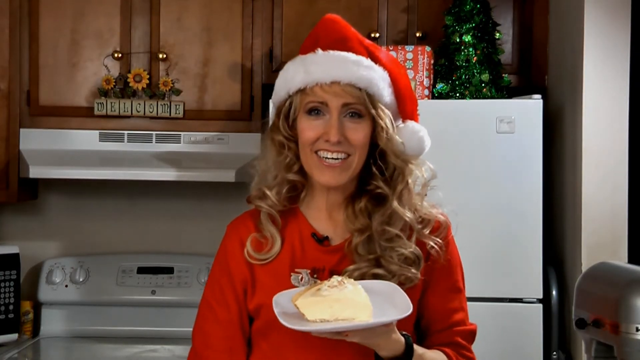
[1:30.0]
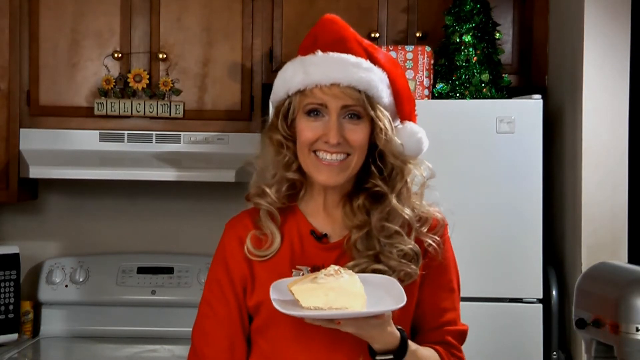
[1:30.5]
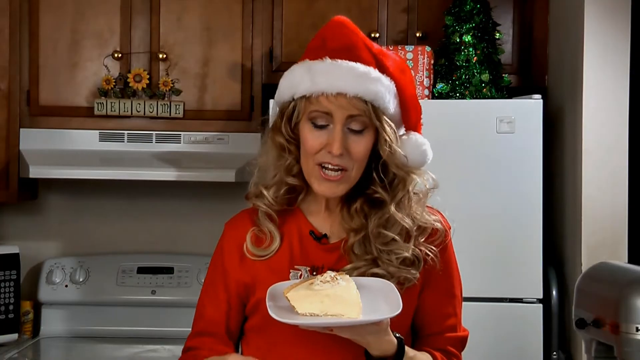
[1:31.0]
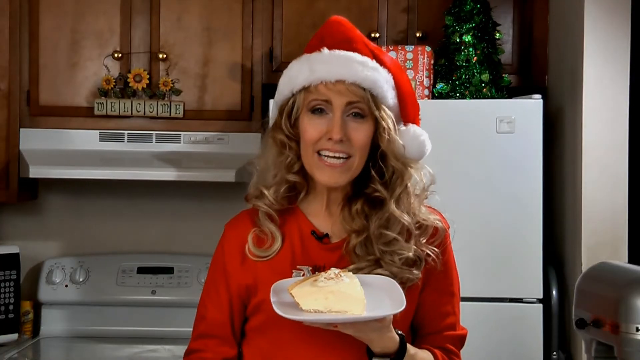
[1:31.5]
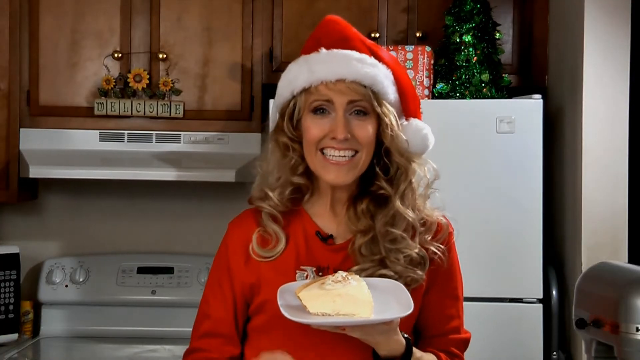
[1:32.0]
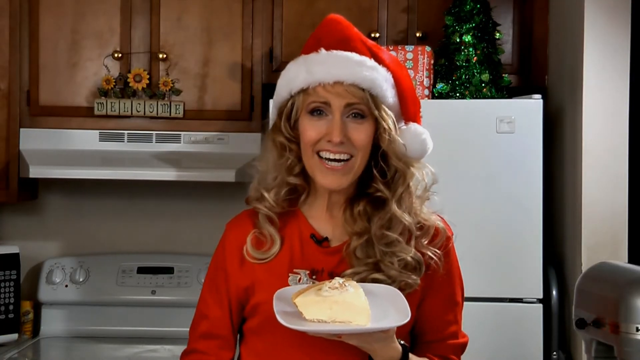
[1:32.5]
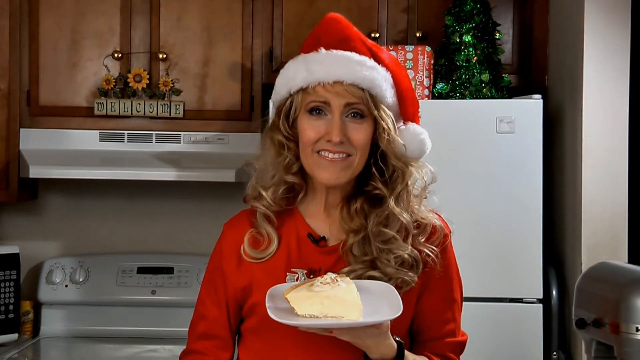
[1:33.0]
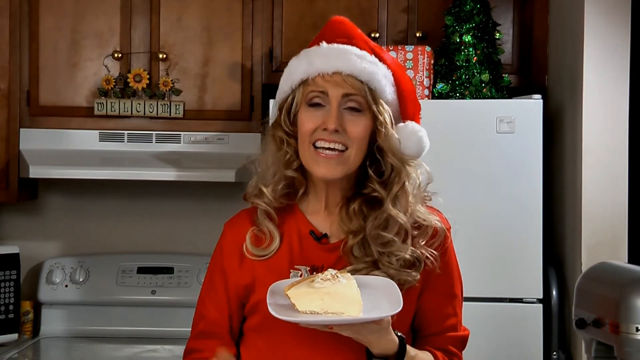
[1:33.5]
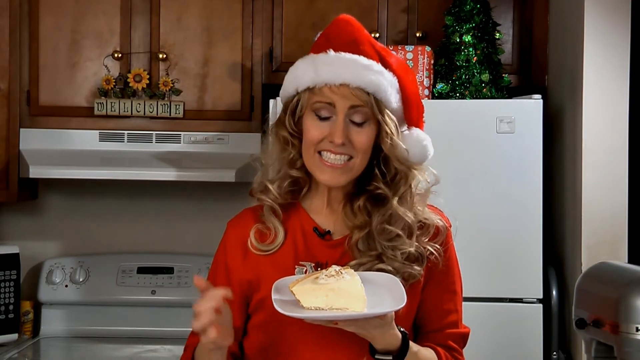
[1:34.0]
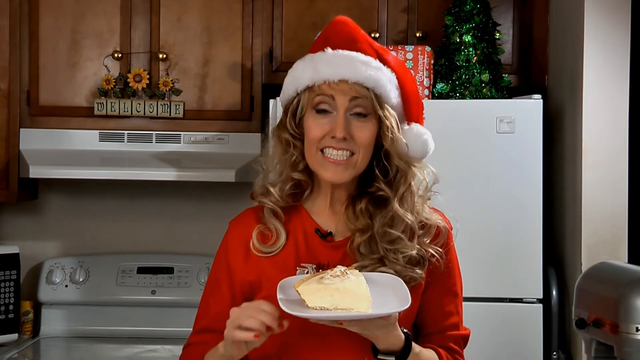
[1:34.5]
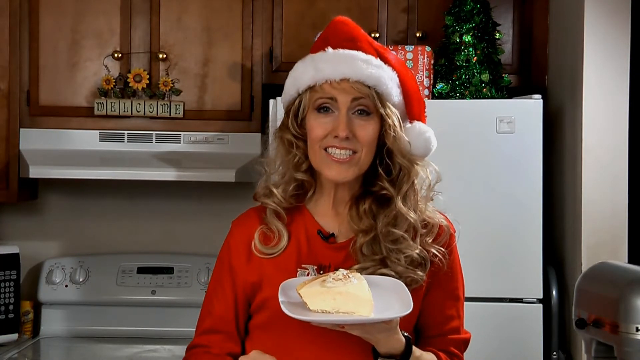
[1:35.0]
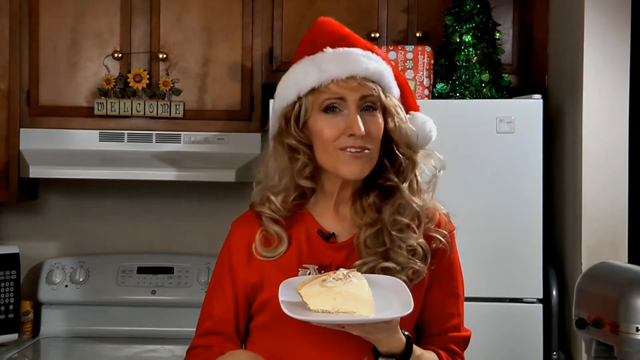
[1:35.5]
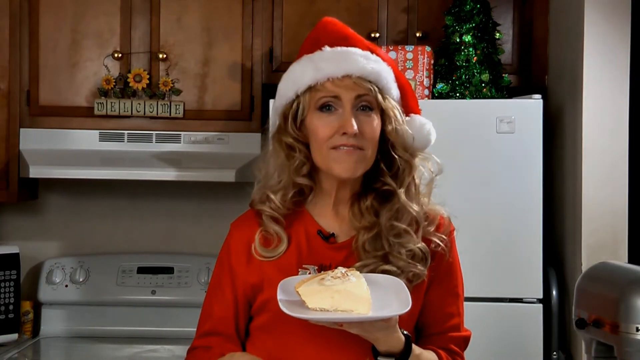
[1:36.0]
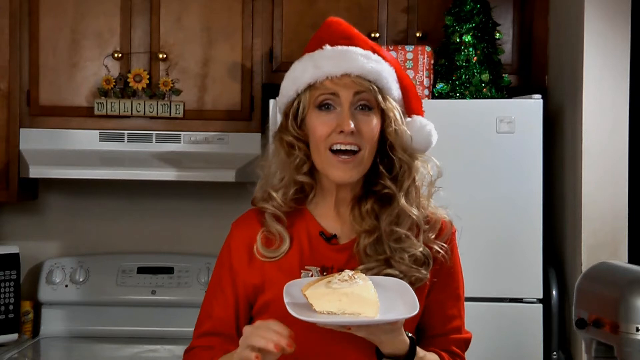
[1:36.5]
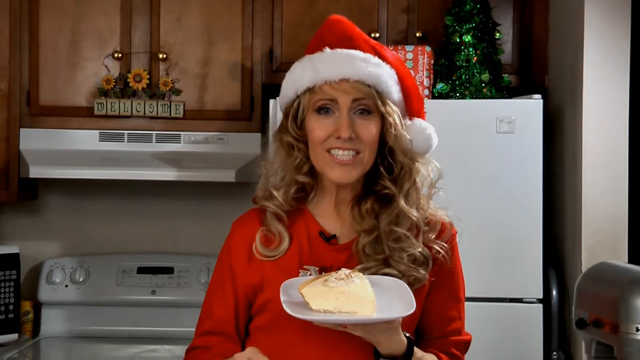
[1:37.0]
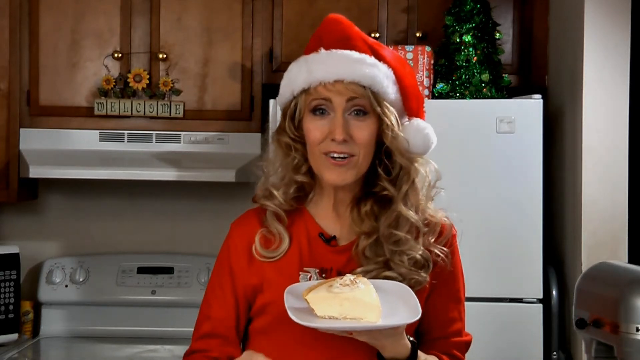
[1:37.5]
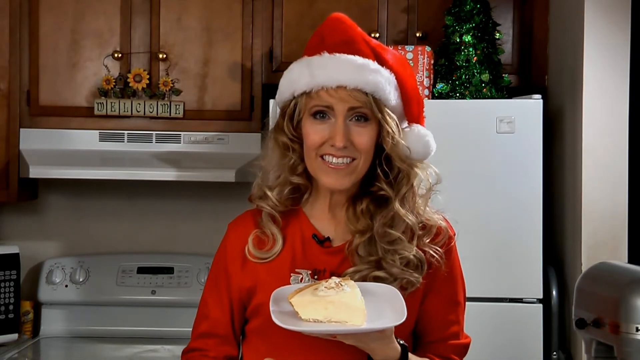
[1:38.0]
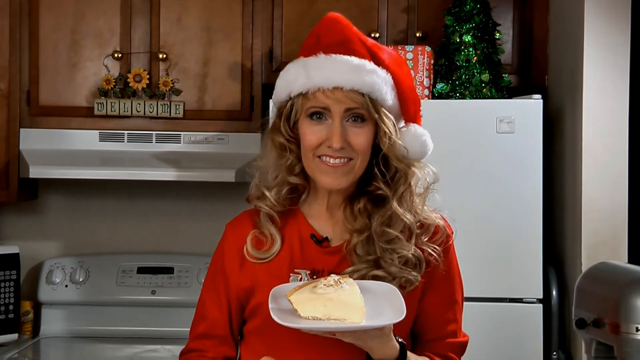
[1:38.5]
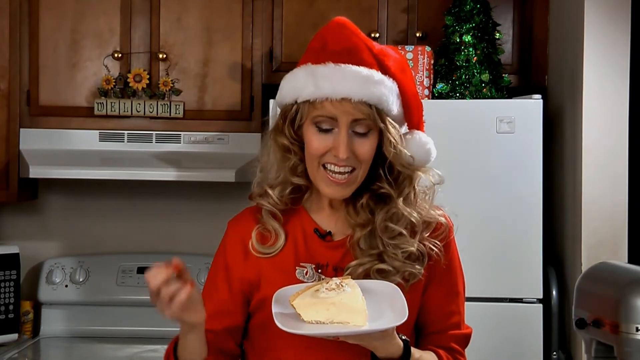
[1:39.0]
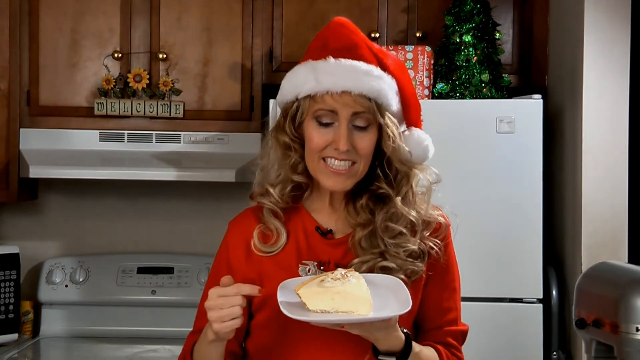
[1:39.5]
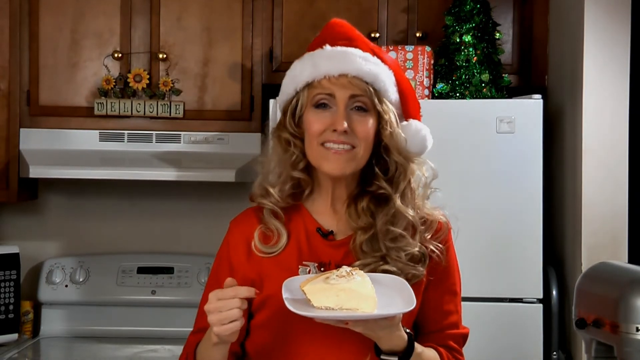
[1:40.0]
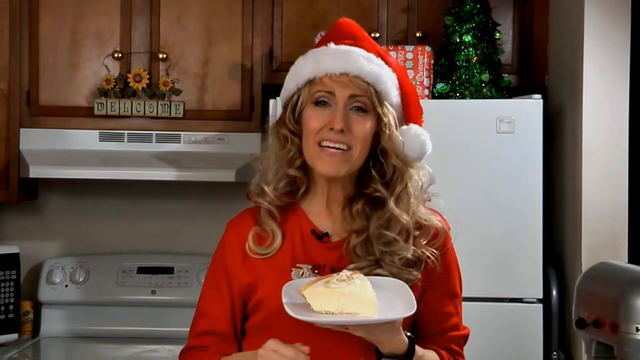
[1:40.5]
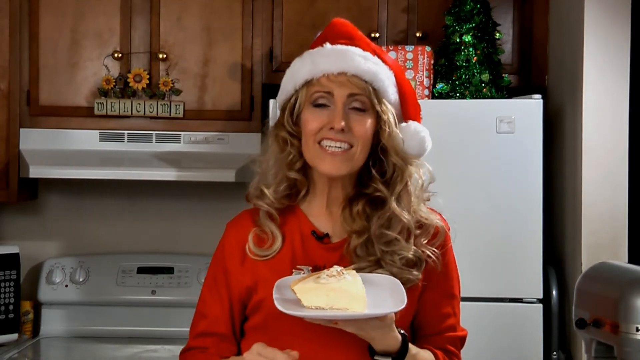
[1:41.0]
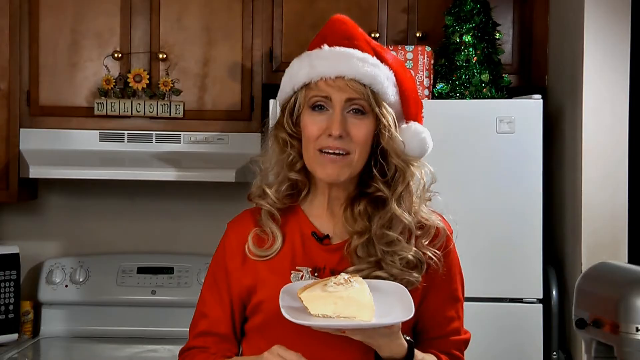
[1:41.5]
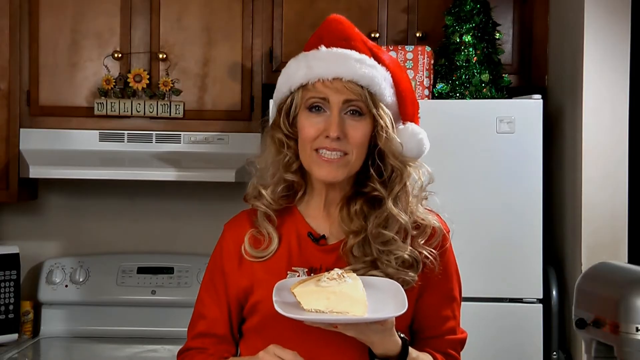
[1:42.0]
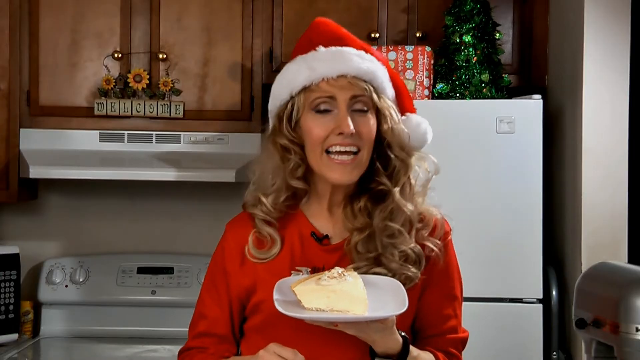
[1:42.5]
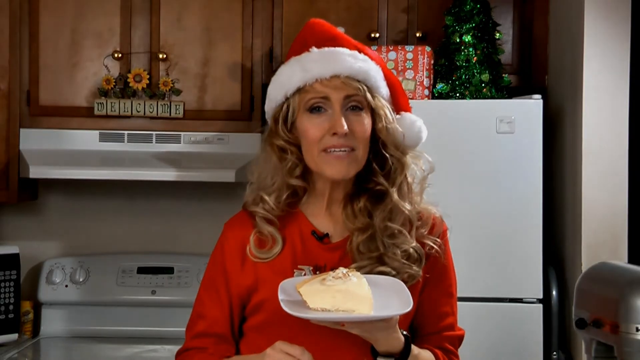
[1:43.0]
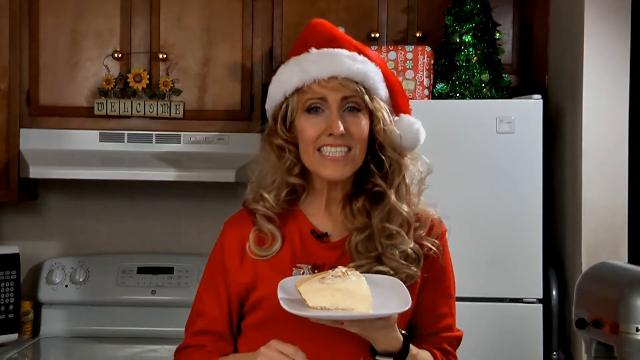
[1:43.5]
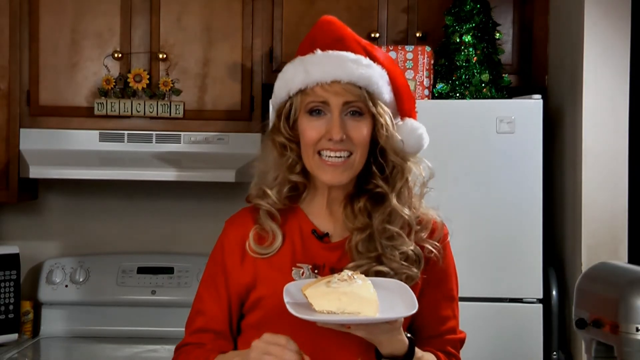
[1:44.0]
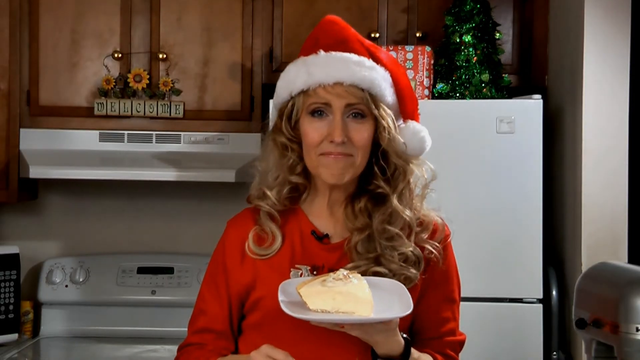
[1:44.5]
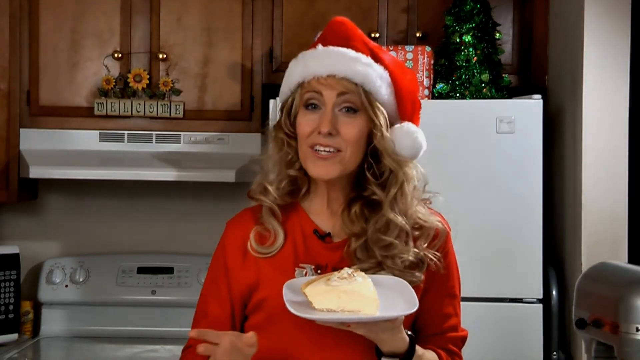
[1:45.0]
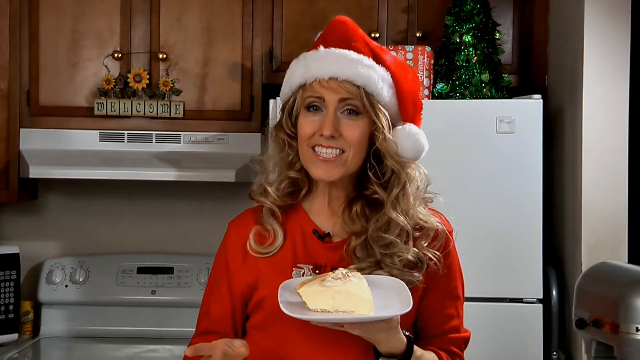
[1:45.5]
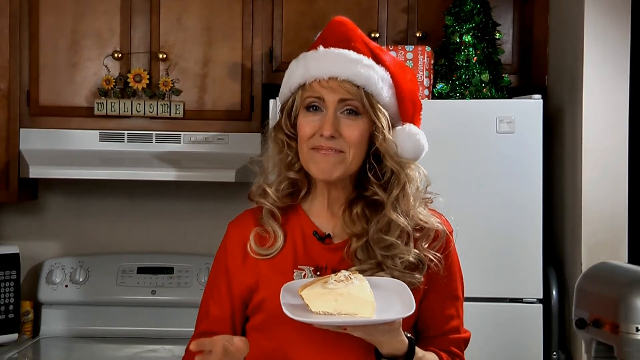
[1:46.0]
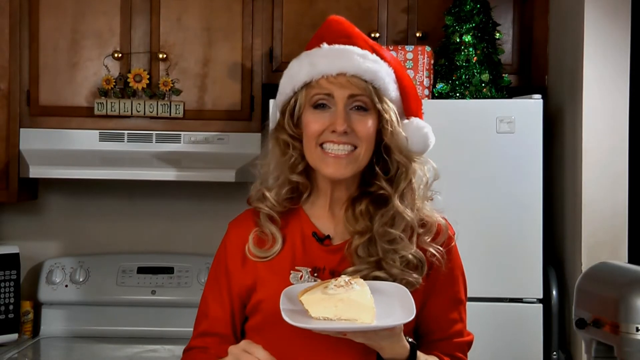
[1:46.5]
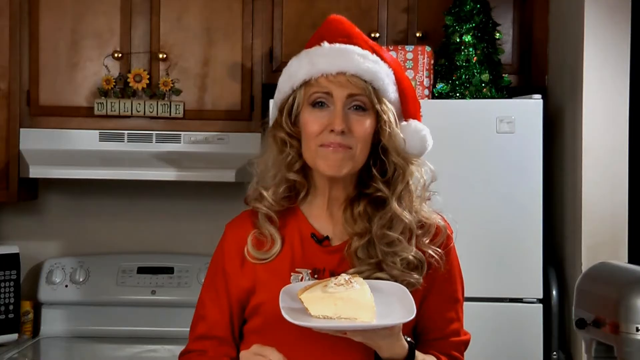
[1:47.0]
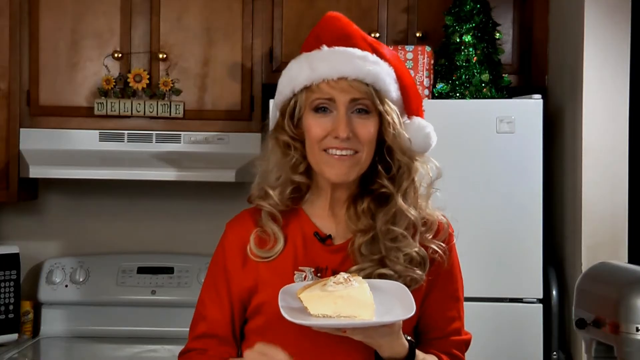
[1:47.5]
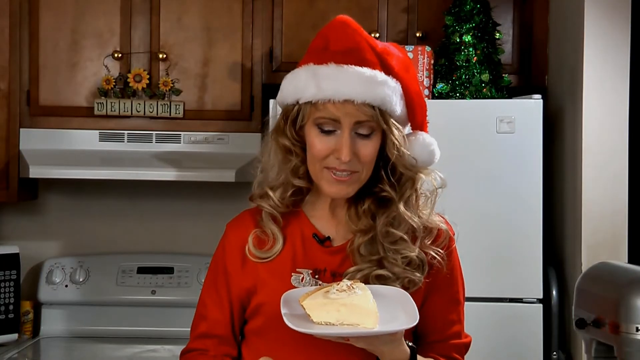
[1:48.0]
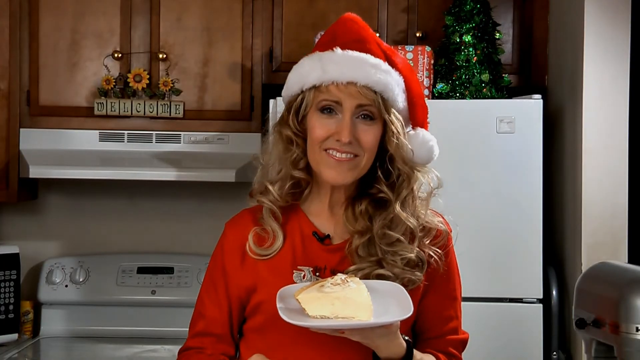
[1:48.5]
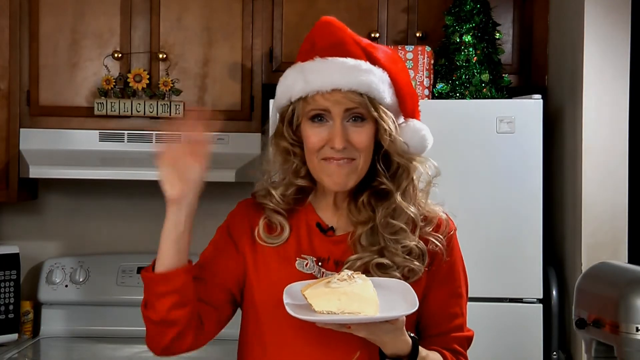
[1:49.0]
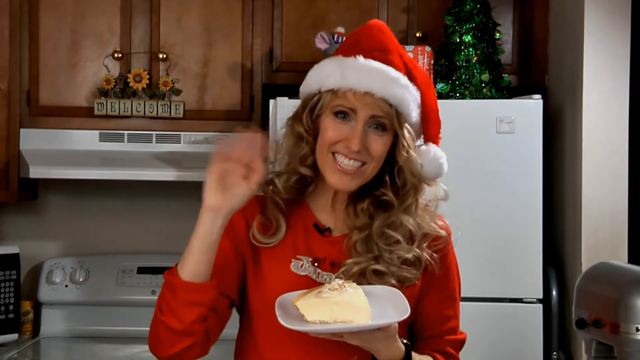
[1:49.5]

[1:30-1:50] The woman speaks directly into the camera about the pie, with a small microphone attached to her V-neck Christmas shirt. She has nice teeth and nice hair. In the back, a flower decoration on the cabinet says "welcome", and on top of the refrigerator there is a mini tree with some type of present right beside it. She keeps holding the pie while speaking, and as the shot nears its end she appears to wave goodbye to the camera.